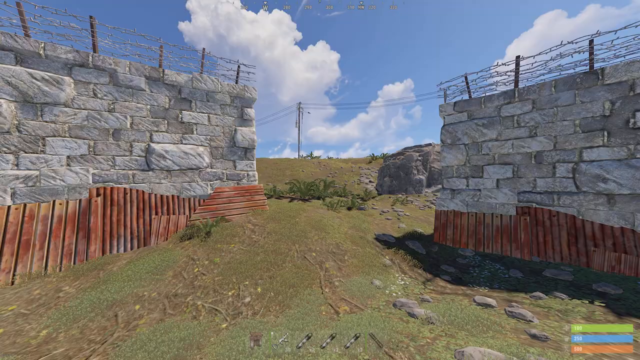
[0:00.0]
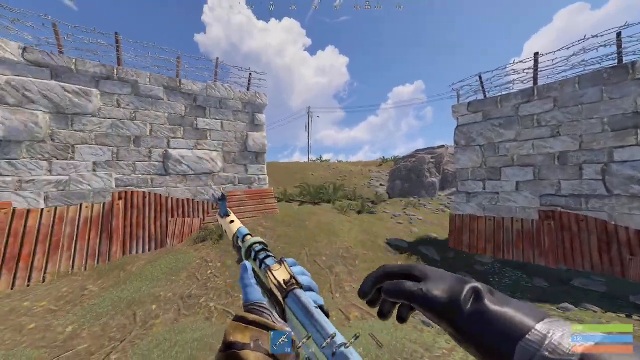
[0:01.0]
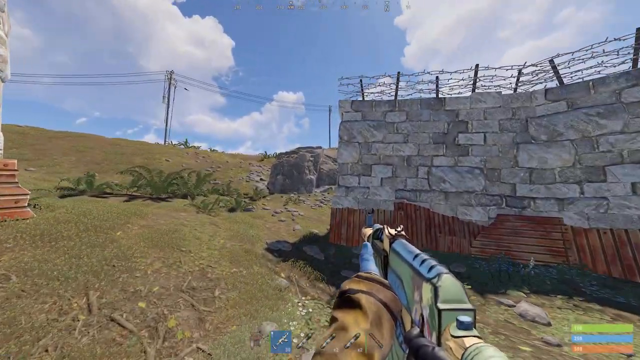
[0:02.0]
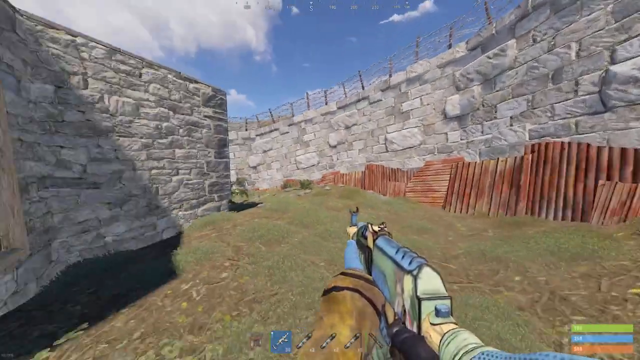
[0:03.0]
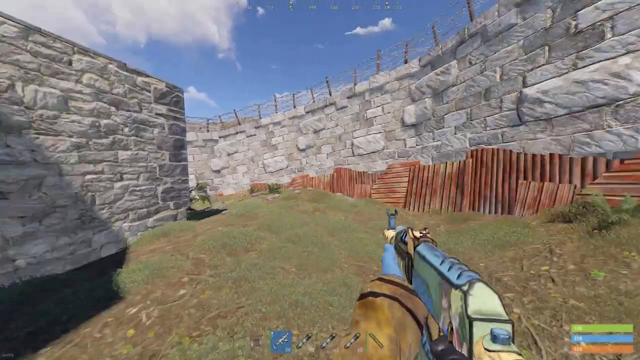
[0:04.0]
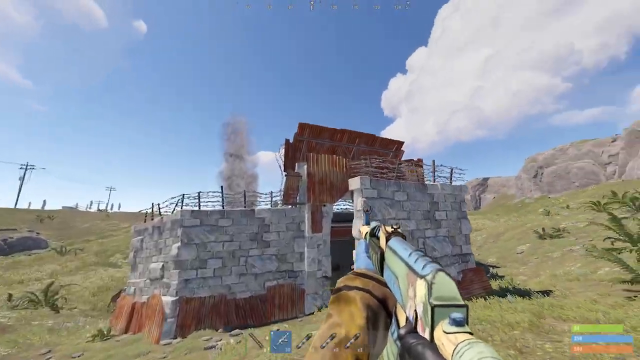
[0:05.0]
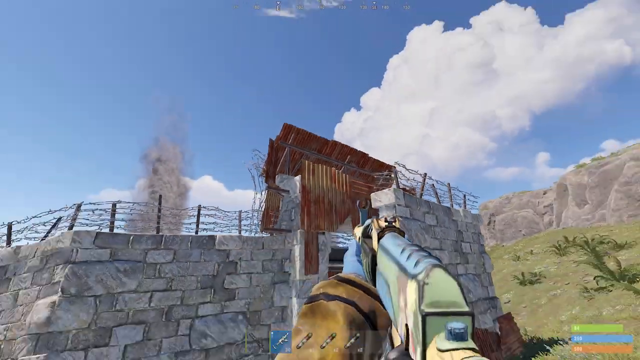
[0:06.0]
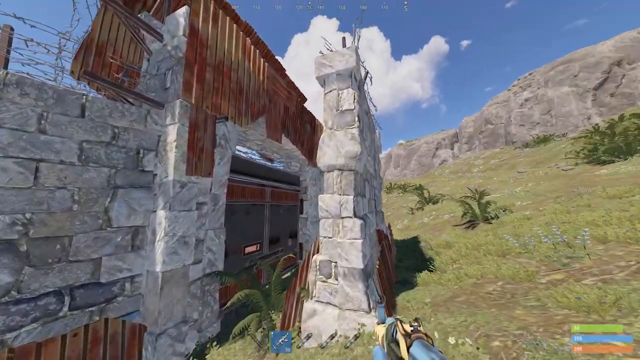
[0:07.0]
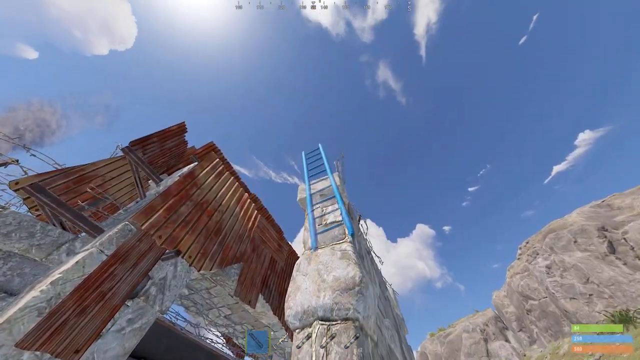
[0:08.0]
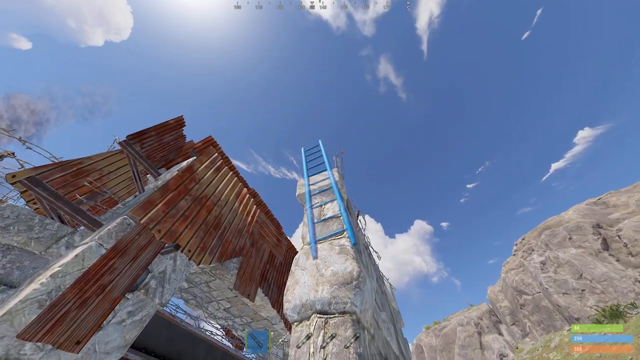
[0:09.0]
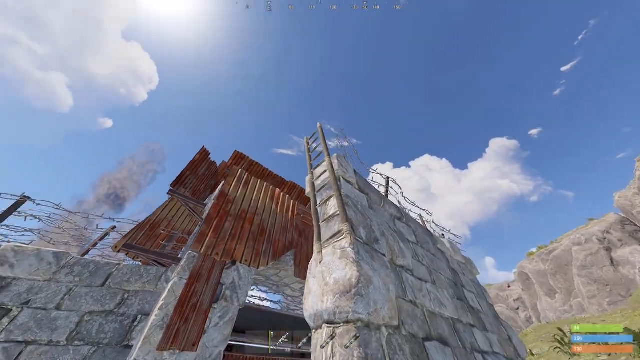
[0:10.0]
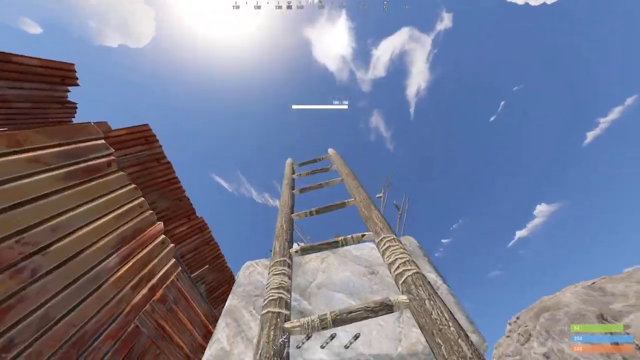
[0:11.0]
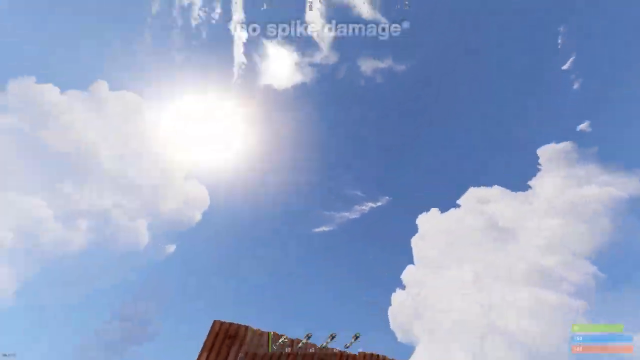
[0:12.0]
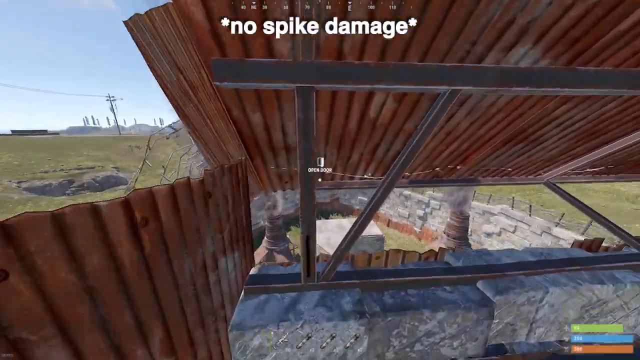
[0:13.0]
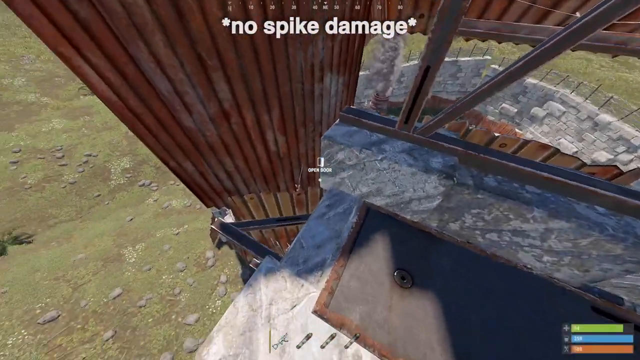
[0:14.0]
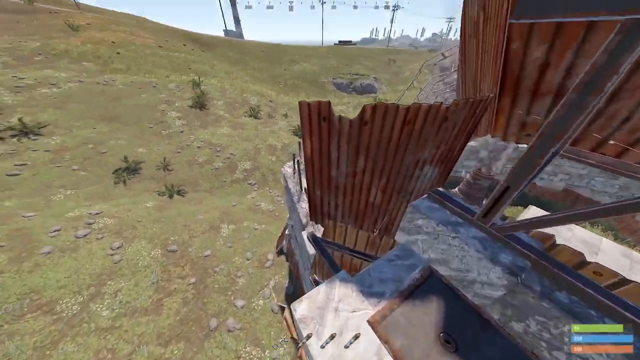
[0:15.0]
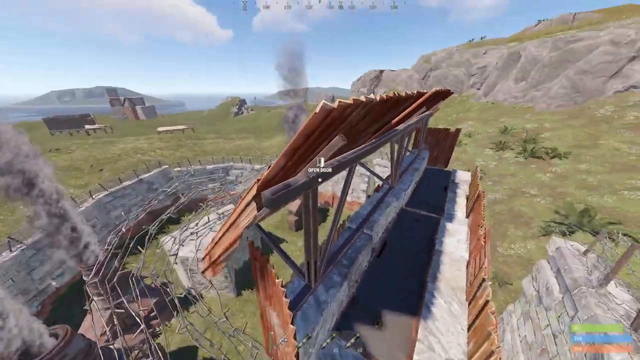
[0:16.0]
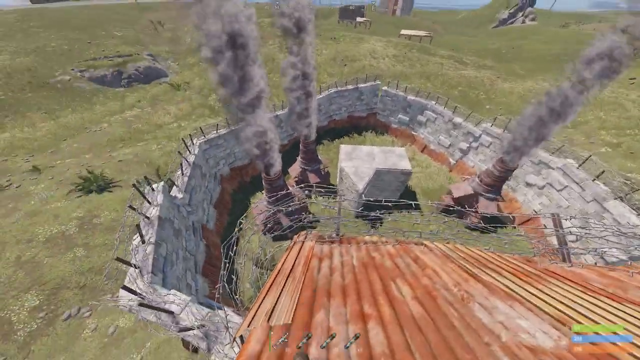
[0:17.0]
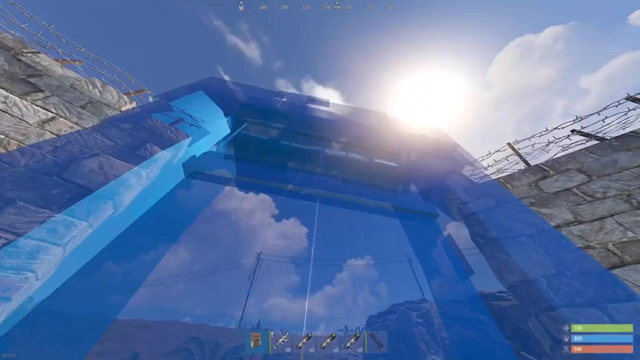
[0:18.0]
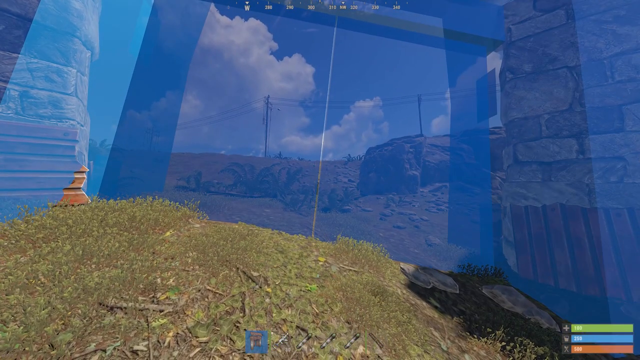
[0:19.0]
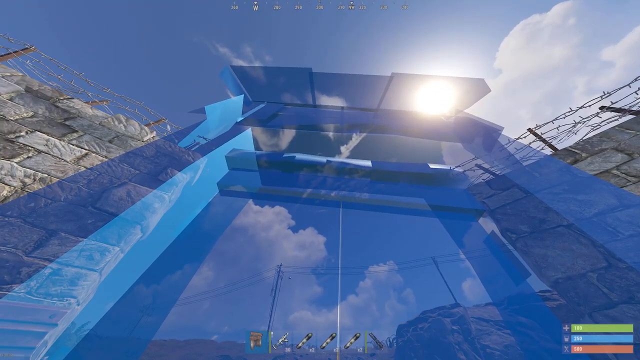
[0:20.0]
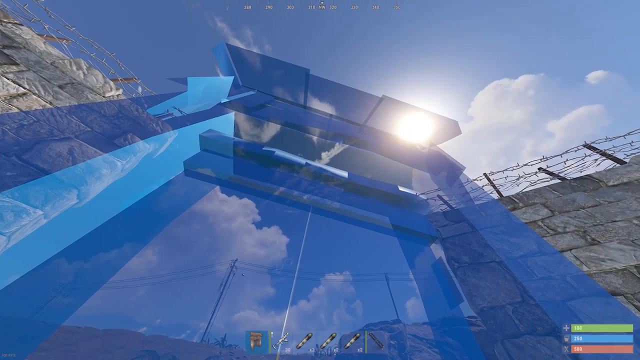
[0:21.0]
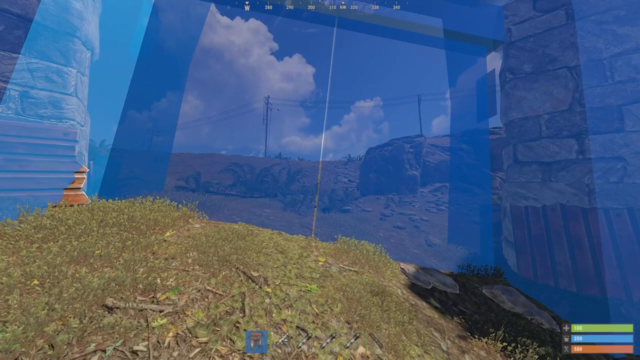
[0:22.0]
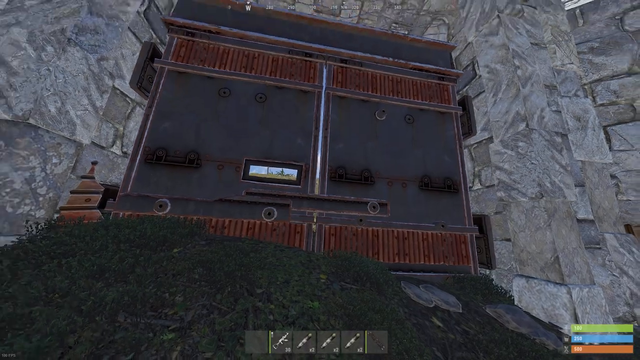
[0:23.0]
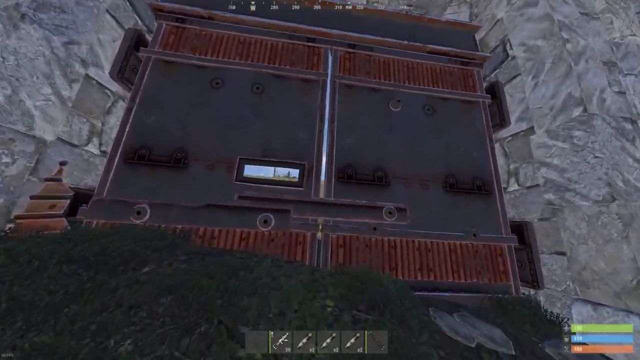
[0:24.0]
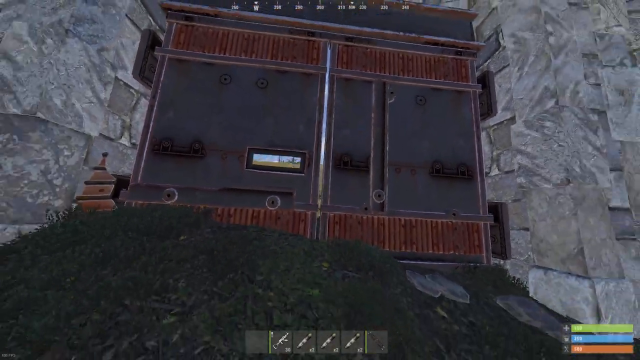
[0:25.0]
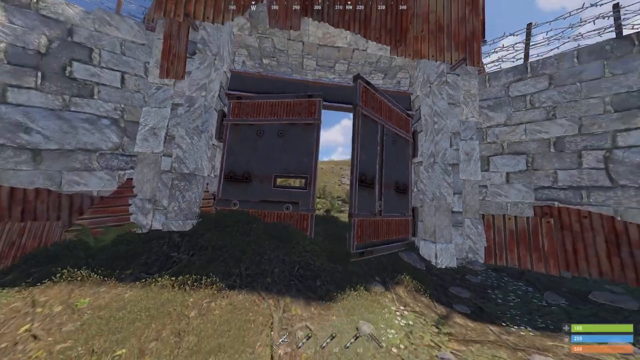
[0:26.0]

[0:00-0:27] The video game Rust is shown. Someone has built a base with high external stone walls topped with barbed wire. The character places a ladder to climb up, and he ends up jumping off the roof to show why the wall needs to be placed in another way. He then places down the large external gate item to complete his compound wall. The open world has a lot of plains and hills and some power lines. There are not really any trees, just small shrubs and vegetation, though there are some large rock formations. At some points the character is holding an AK-47, and at other points he has no weapon in his hands. He is wearing gloves and a long-sleeve jacket.